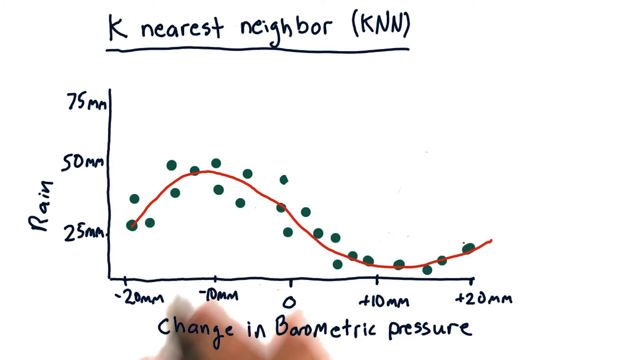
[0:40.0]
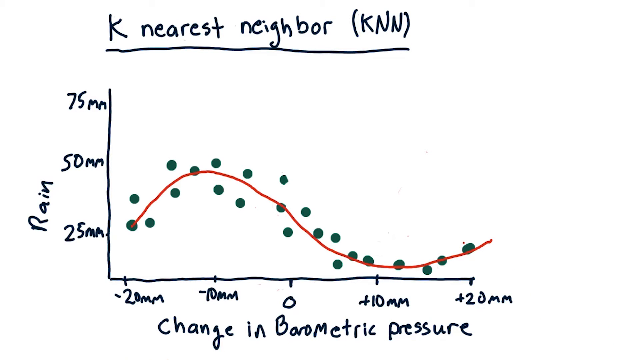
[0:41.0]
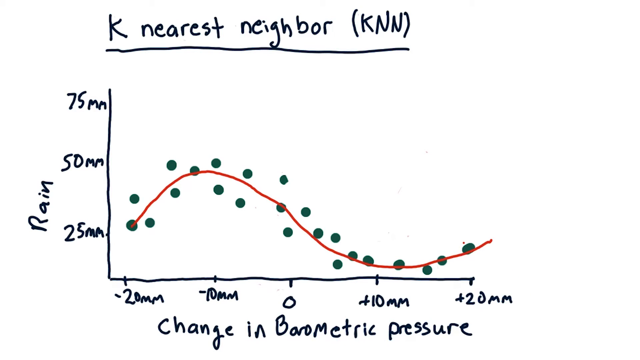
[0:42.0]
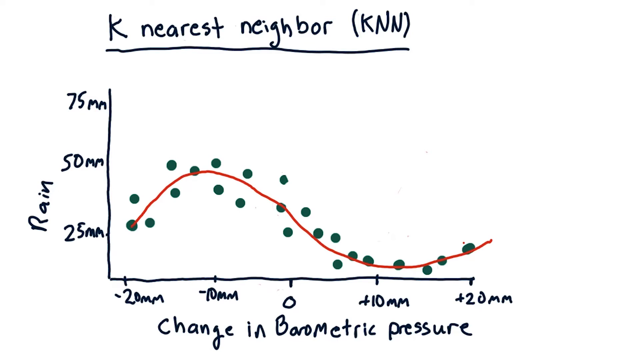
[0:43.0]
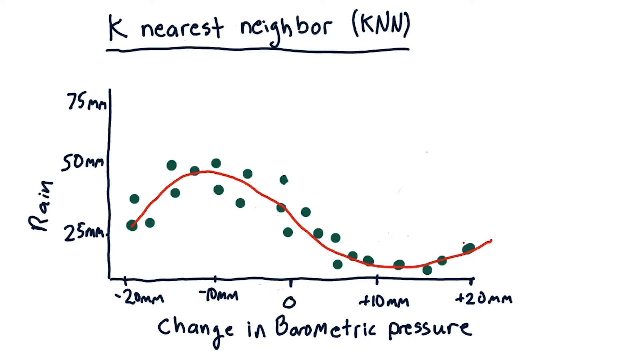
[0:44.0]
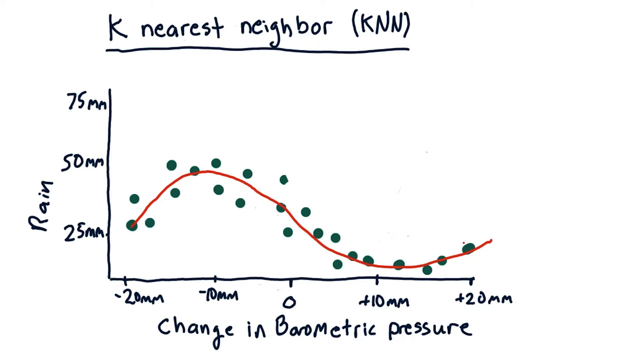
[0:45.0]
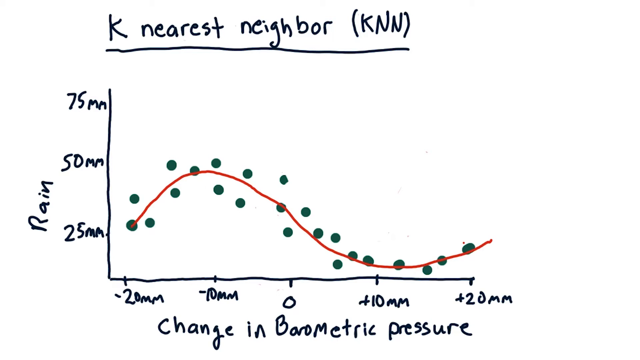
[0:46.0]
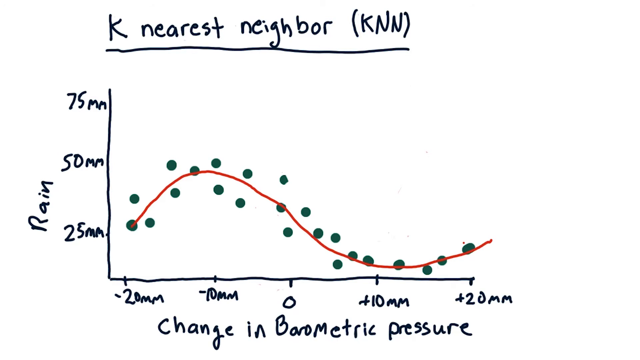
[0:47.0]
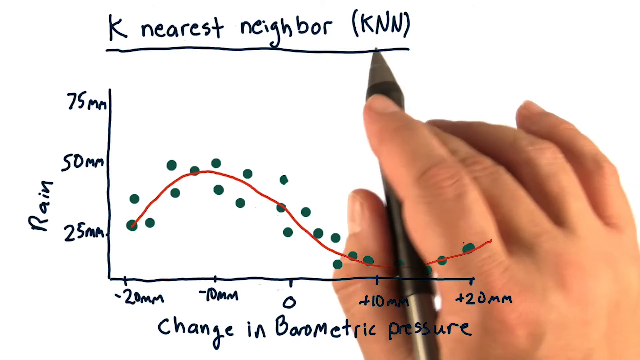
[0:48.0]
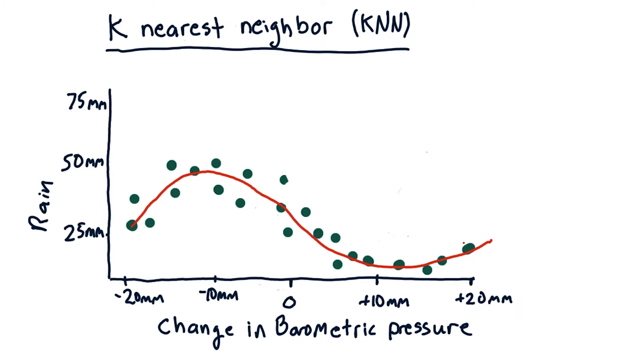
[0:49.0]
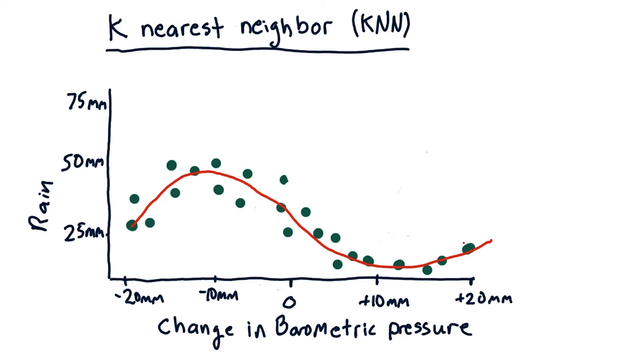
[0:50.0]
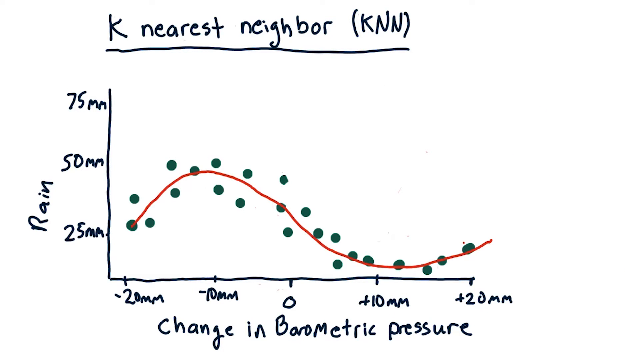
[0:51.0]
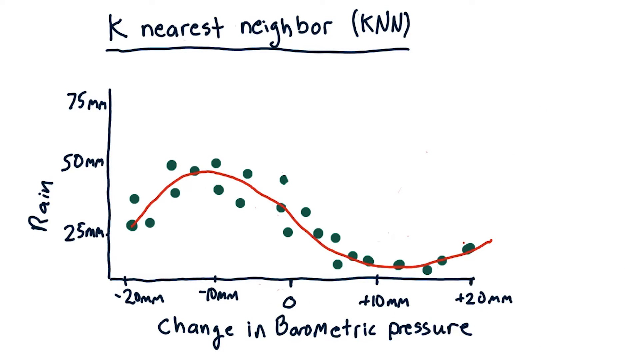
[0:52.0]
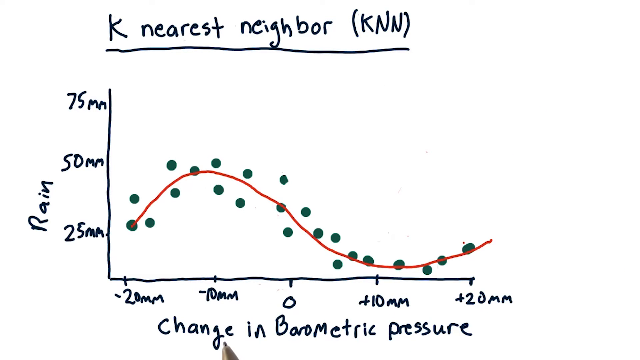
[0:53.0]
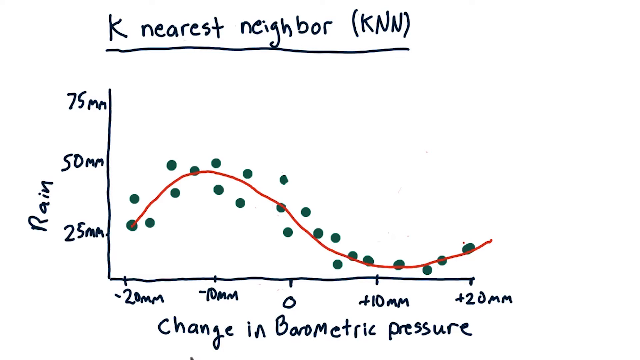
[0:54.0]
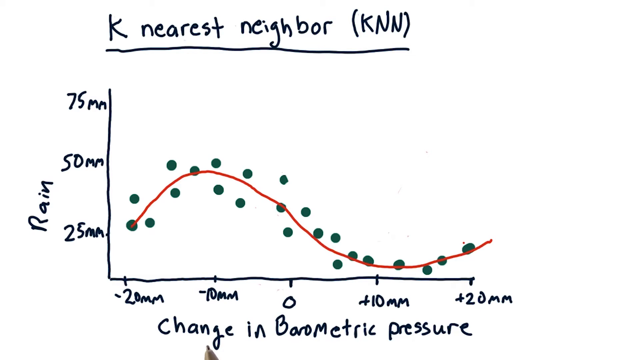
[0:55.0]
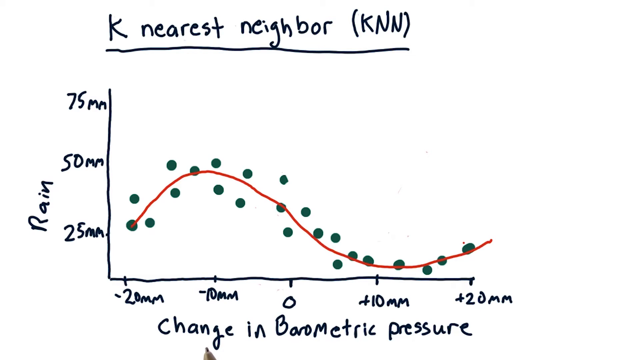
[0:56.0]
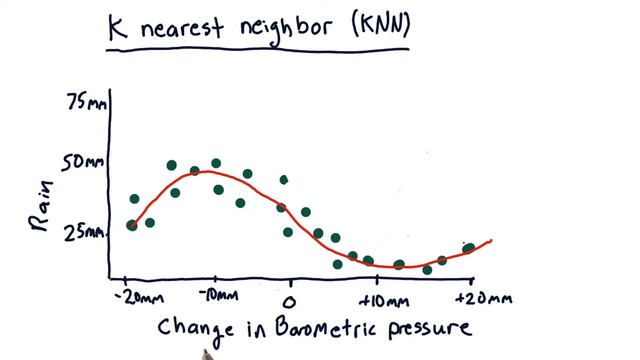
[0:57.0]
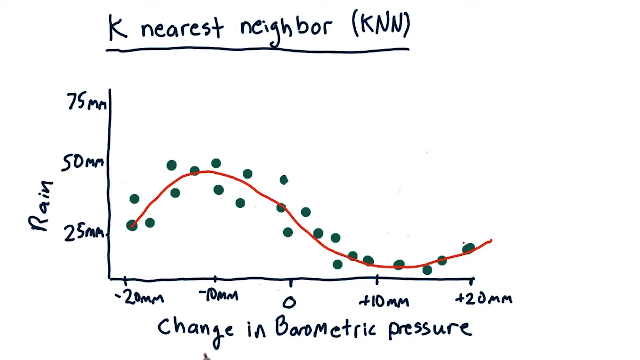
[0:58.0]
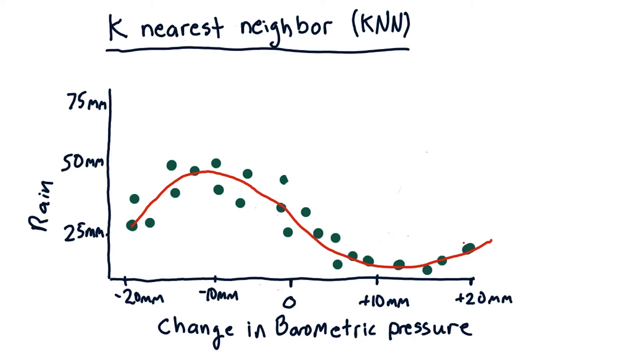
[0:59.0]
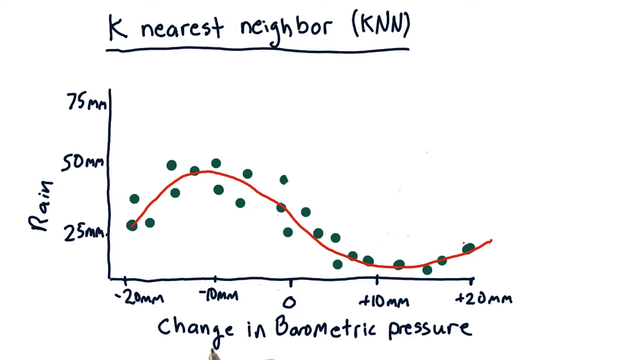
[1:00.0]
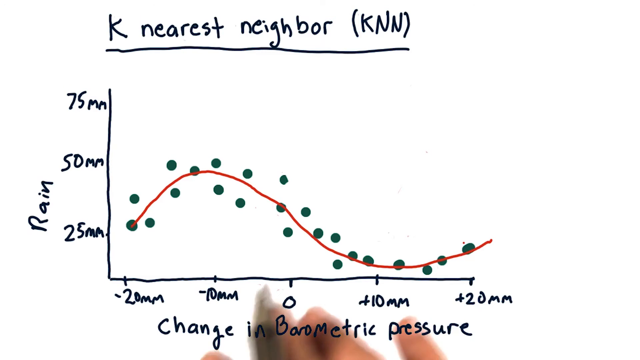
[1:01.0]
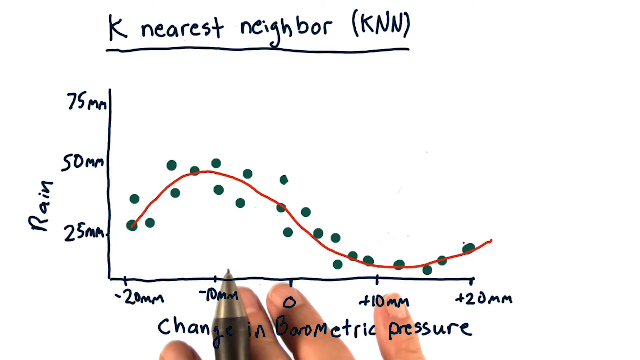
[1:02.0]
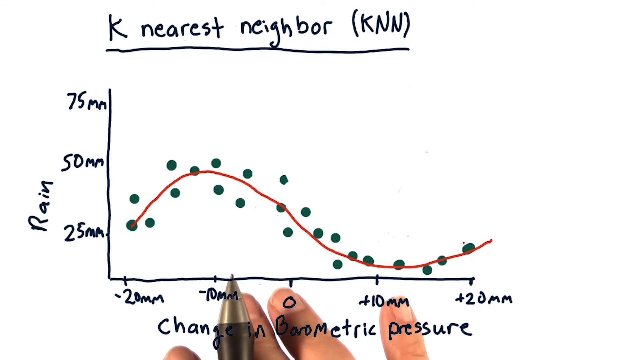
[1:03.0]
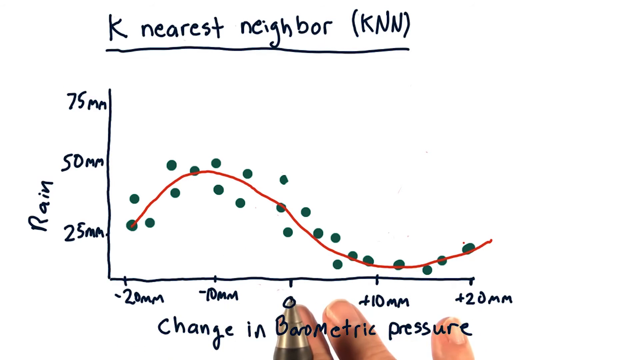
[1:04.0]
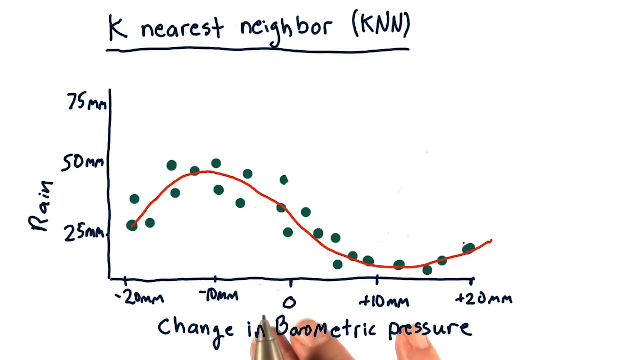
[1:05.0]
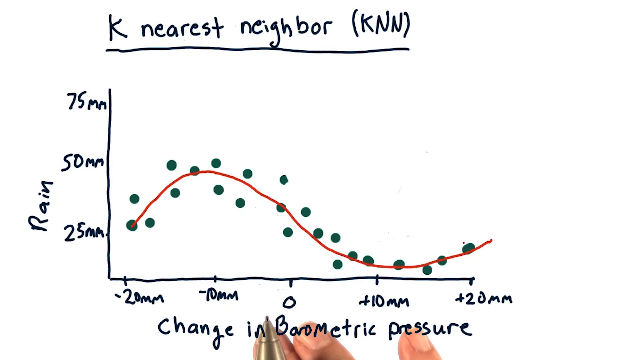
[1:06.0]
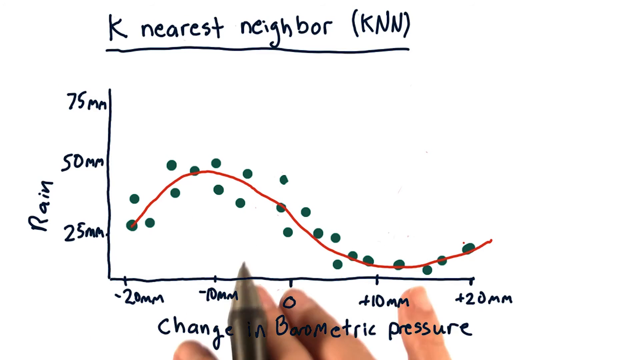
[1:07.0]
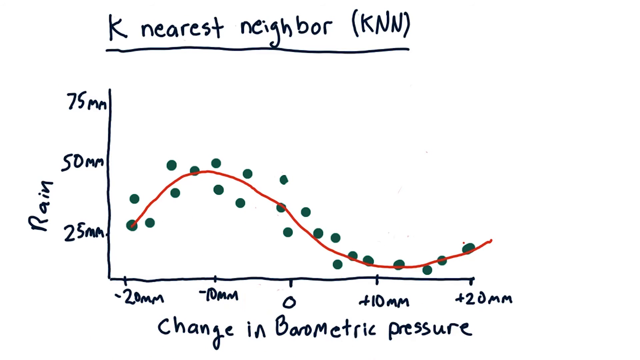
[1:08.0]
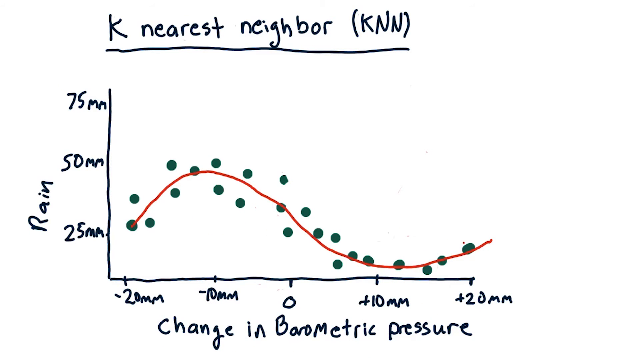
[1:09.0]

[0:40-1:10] A lingering shot shows the hand-drawn graph on the white background, labelled 'K nearest neighbour (KNN)'. The vertical axis is 'Rain' with 75mm, 50mm and 25mm, and the horizontal axis is 'Change in barometric pressure' with -20mm, -10mm, 0, +10mm and +20mm. The green dots on the graph start at about 25mm, rise to 50mm as the change in barometric pressure reaches -10mm, fall away again to around 25mm or lower by +10mm, and then start to rise again. This general trend is denoted by a thin red line drawn through the middle of the groupings of green dots. The hand is absent from the screen for some time before quickly reappearing, moving up into frame and disappearing down again. The very end of the pen then hovers below the word 'change' on the bottom axis. The fingers then appear on screen, moving around as if to emphasise what is being said.